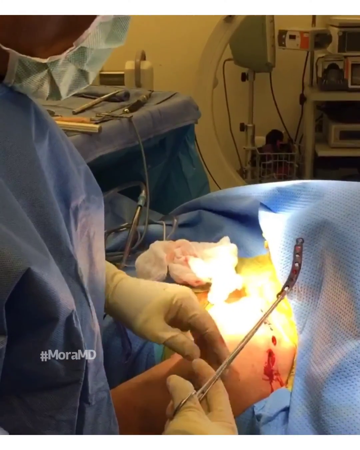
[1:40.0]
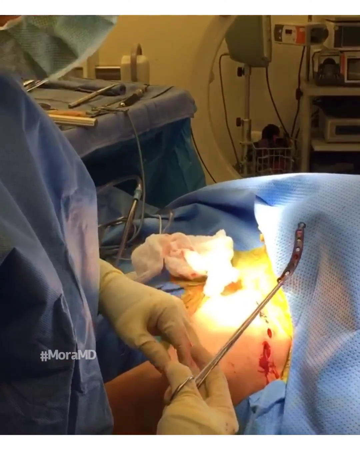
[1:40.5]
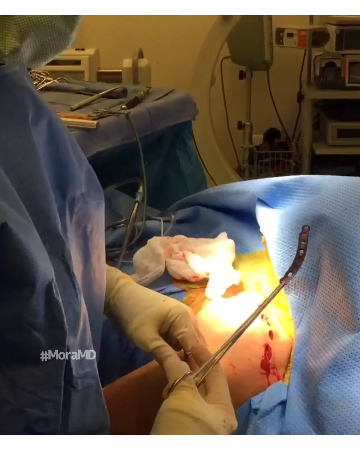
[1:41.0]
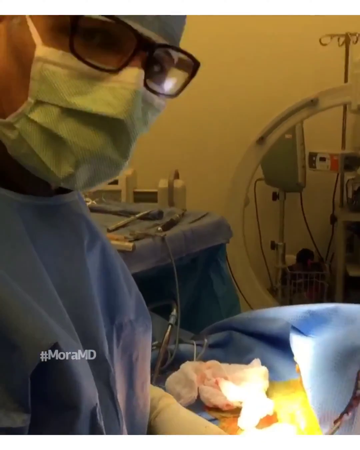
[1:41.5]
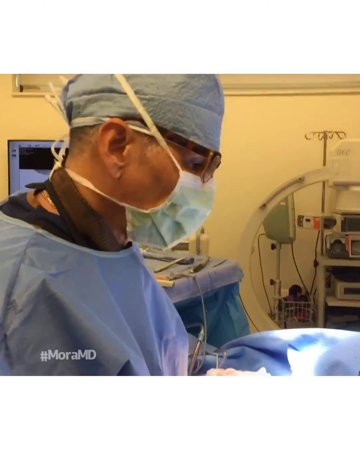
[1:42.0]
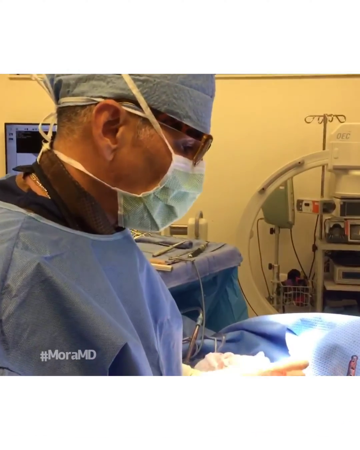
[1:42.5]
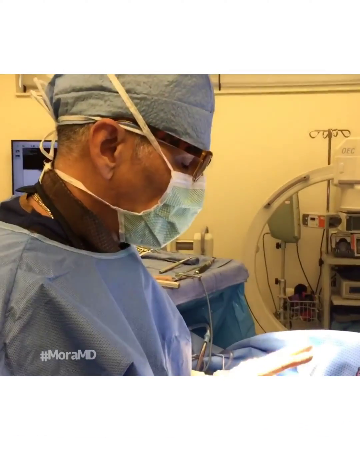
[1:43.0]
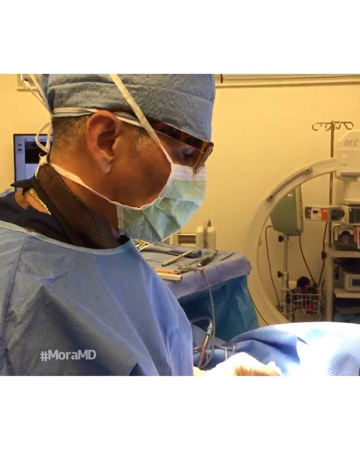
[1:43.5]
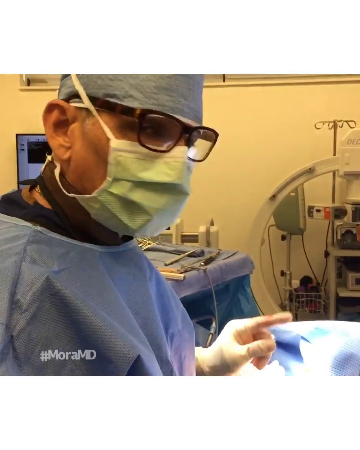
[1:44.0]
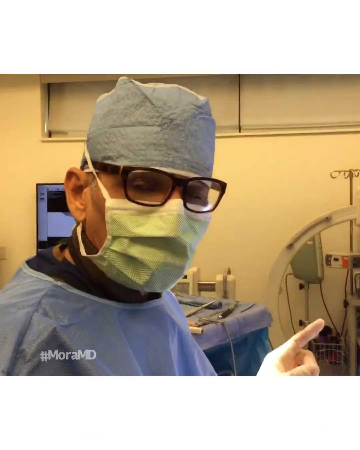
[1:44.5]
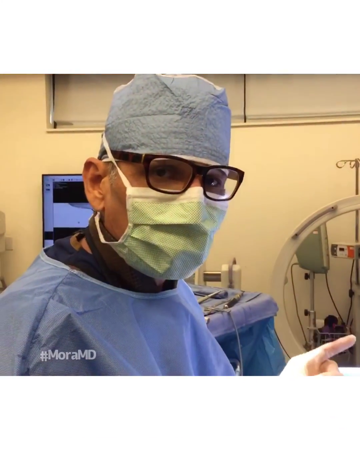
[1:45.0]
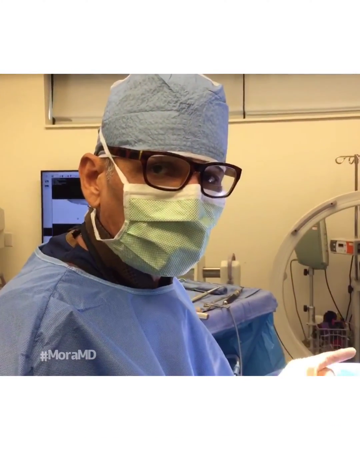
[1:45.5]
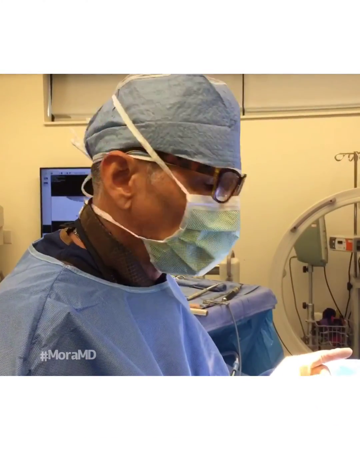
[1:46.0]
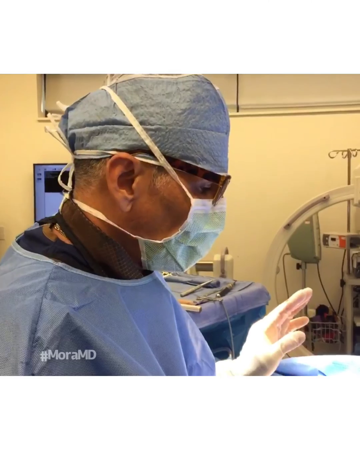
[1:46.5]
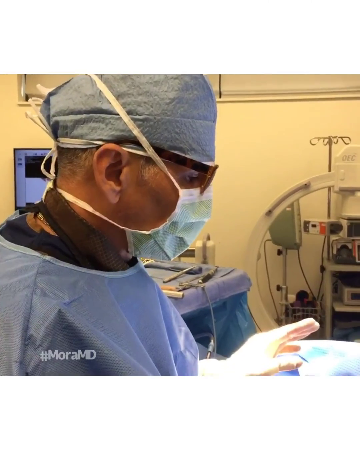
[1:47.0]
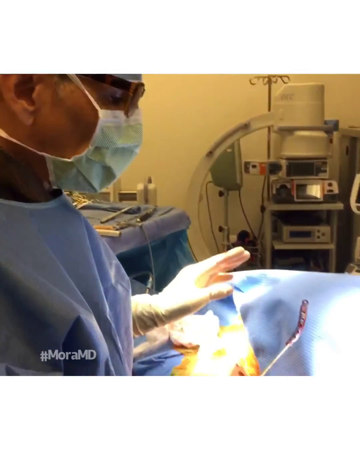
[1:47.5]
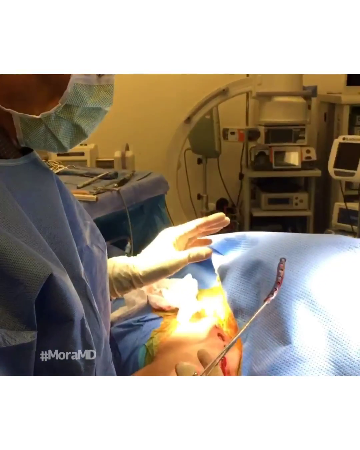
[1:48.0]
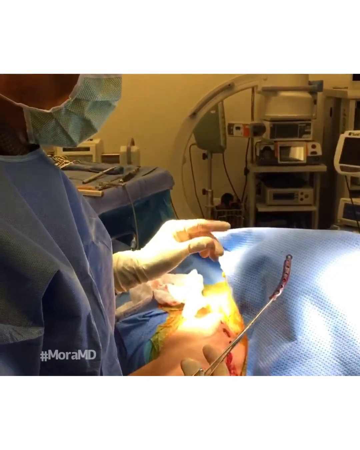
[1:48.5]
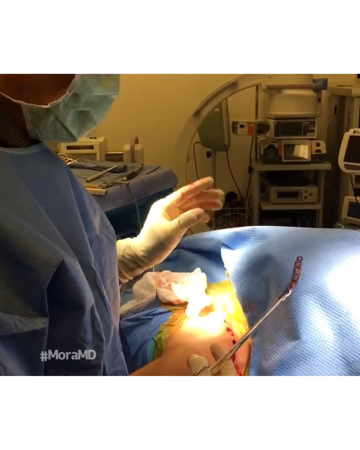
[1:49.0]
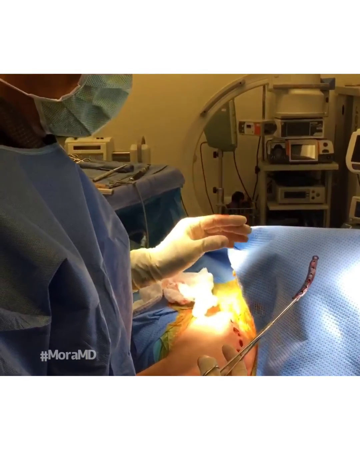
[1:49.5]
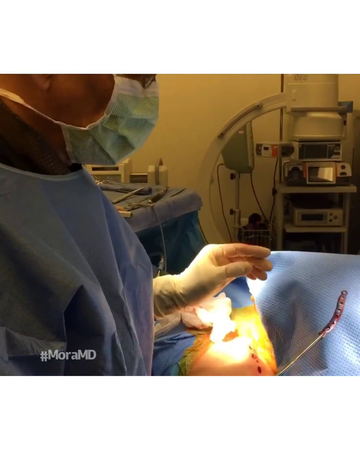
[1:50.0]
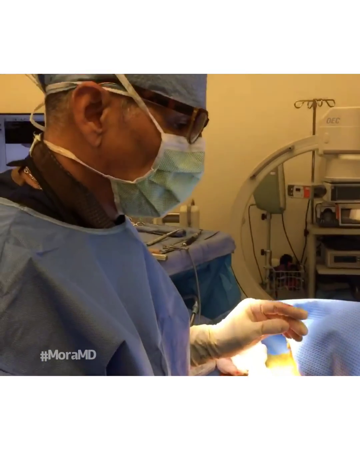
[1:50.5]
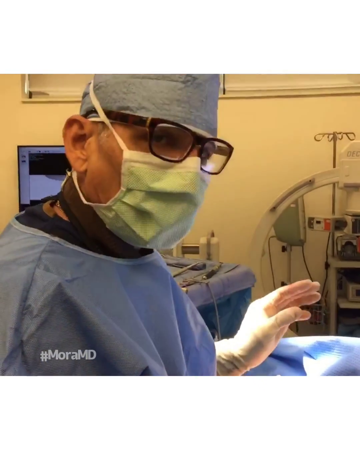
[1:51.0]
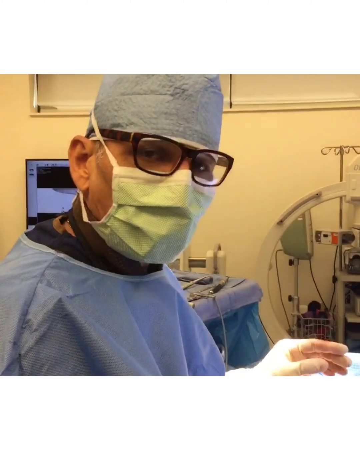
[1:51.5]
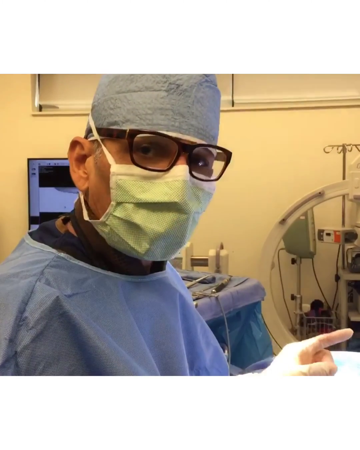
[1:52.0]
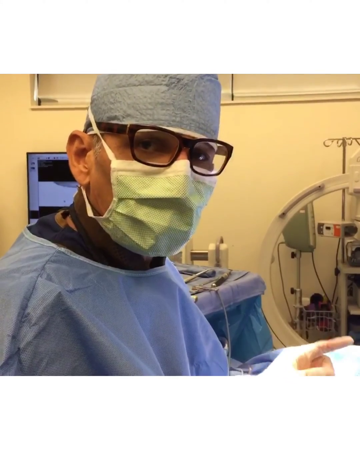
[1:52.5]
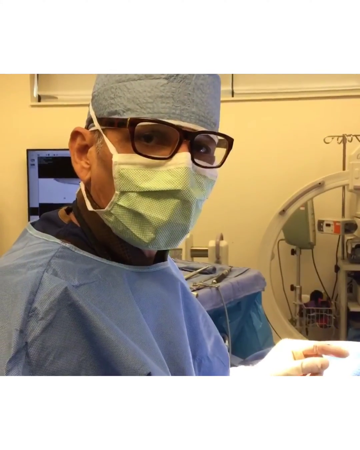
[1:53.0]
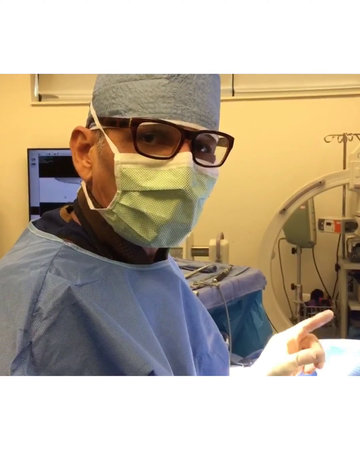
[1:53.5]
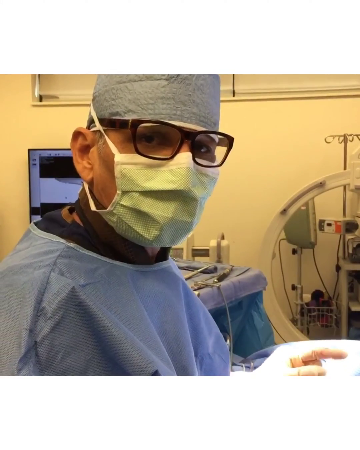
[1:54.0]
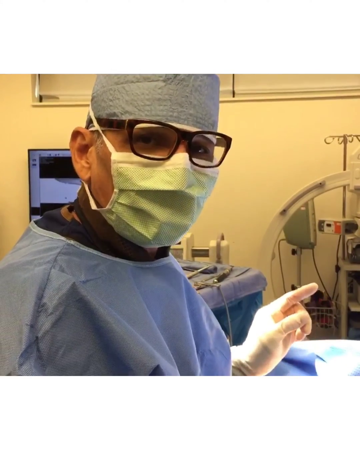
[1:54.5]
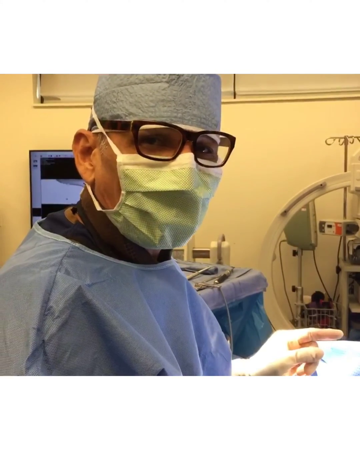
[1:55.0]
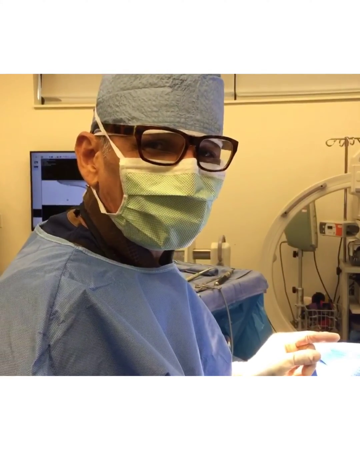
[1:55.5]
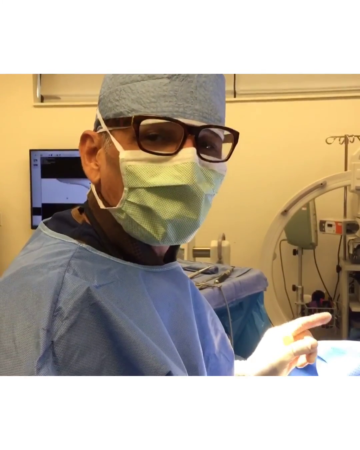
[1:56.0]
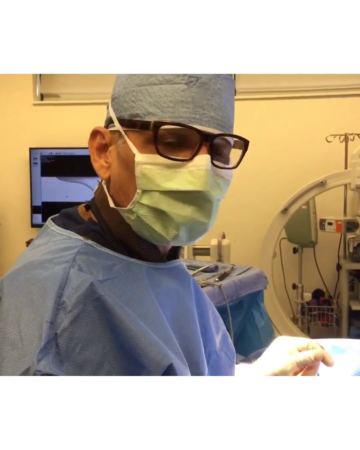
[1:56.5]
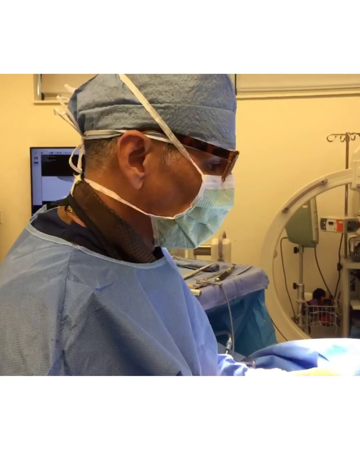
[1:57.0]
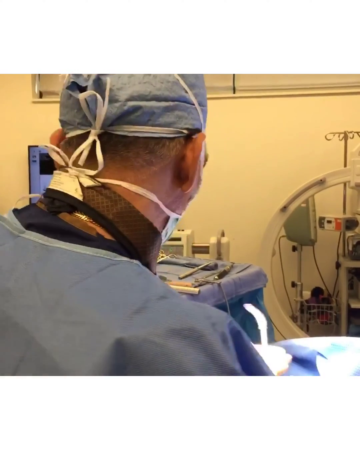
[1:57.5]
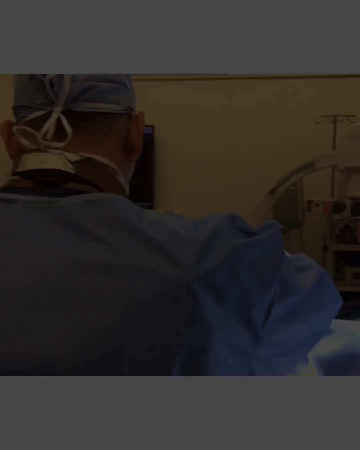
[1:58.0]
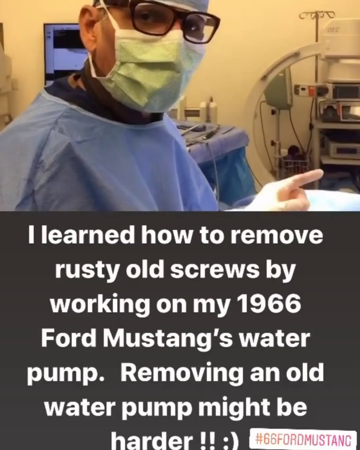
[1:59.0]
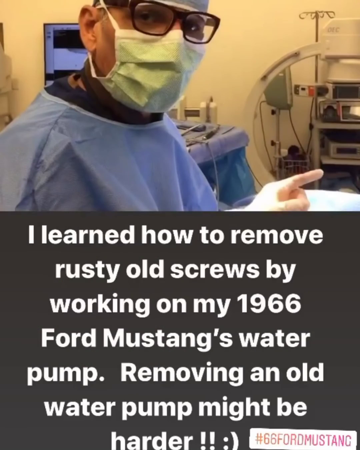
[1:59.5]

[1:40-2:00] The piece of metal pulled from the patient is shown. The camera pans up to the doctor, who looks at and speaks to the camera, making a point with his left hand, index finger extended and shaking it, then sort of using his entire hand as he speaks about the device. Text on screen reads "I learned how to remove rusty old screws by working on my 1966 Ford Mustang's water pump." The doctor keeps motioning and talking to the camera about the piece of metal. Beyond the doctor are many devices, including a table with a device that has some sort of cord on it, and another device on the table that does not look connected, laying on another piece of equipment perpendicular to it. The doctor then turns and puts the piece of metal on something.